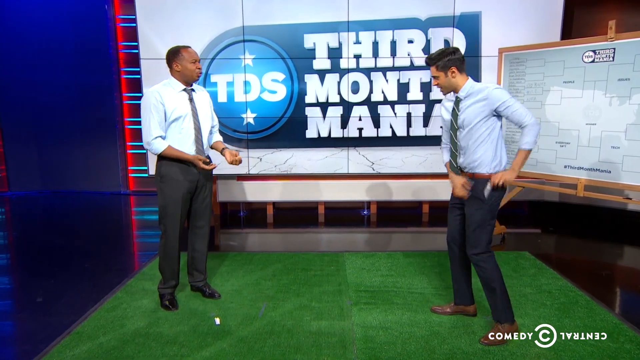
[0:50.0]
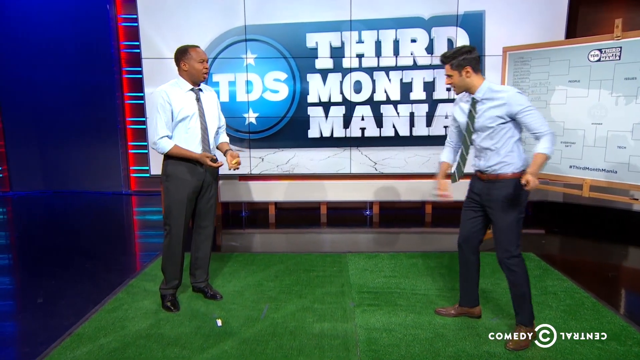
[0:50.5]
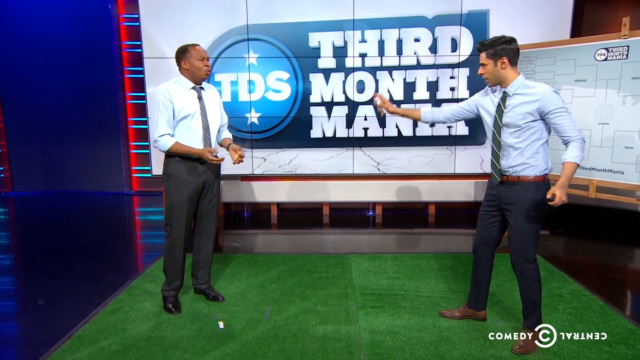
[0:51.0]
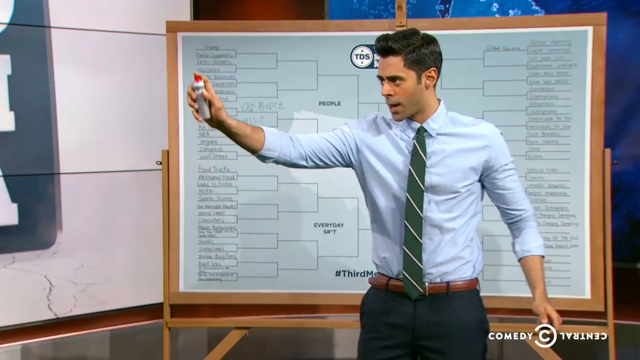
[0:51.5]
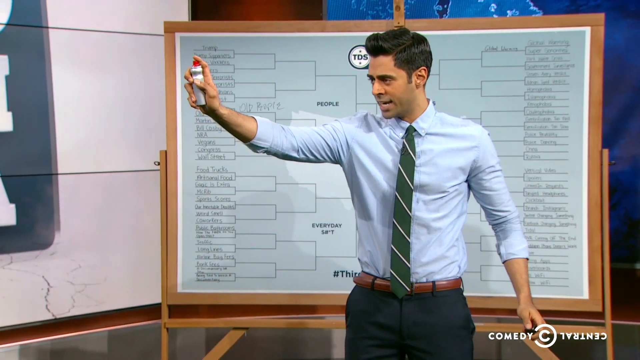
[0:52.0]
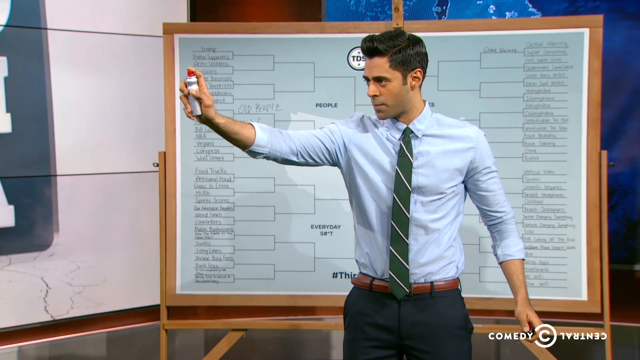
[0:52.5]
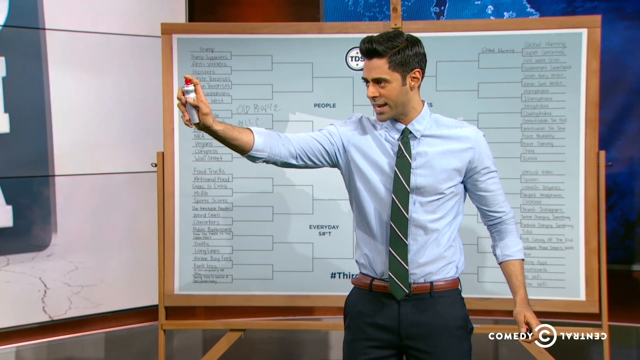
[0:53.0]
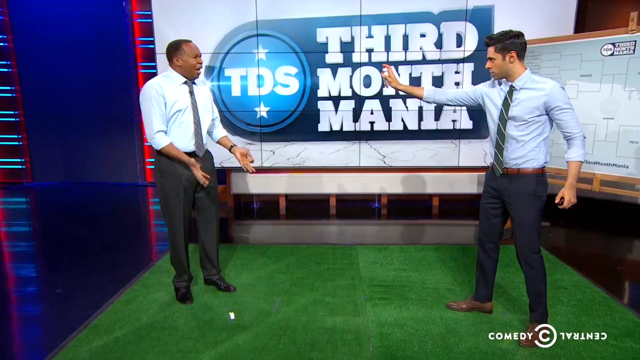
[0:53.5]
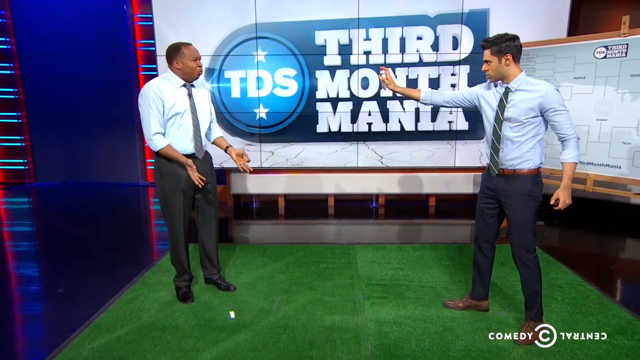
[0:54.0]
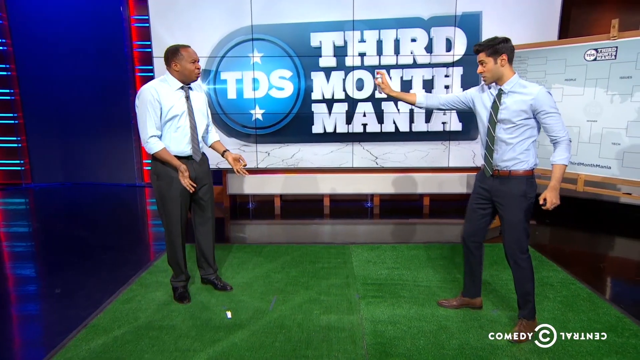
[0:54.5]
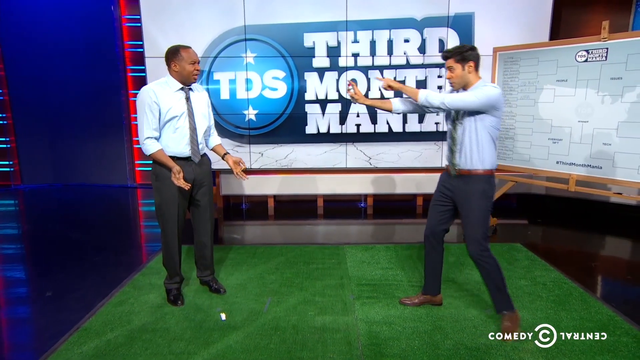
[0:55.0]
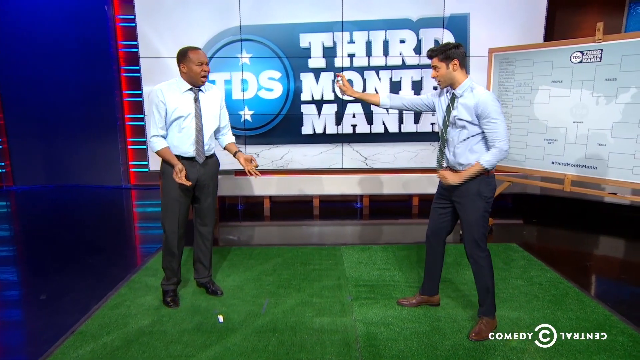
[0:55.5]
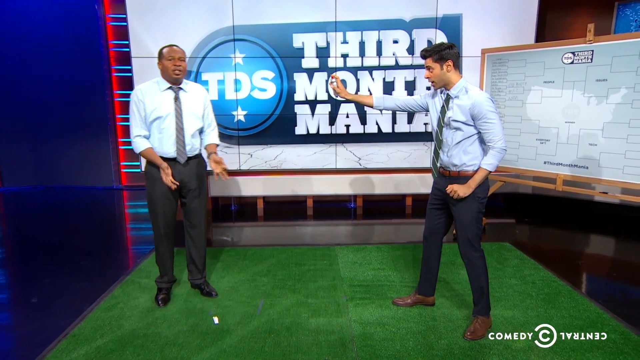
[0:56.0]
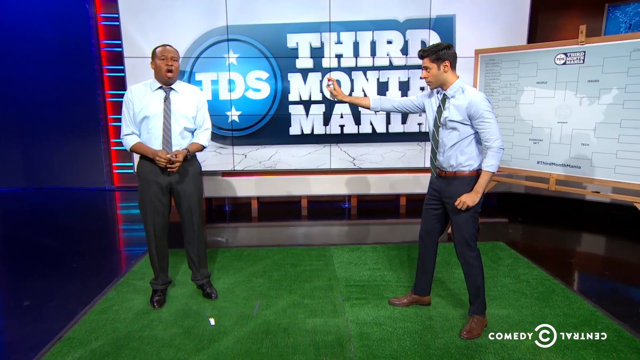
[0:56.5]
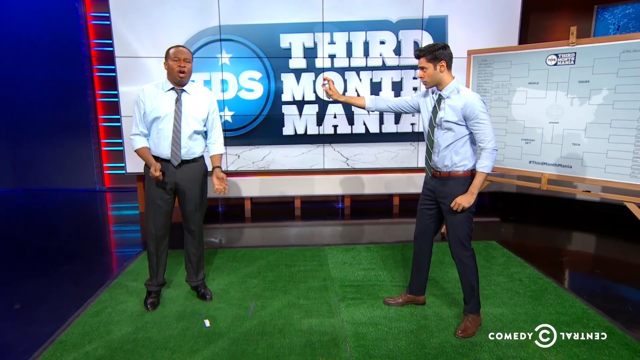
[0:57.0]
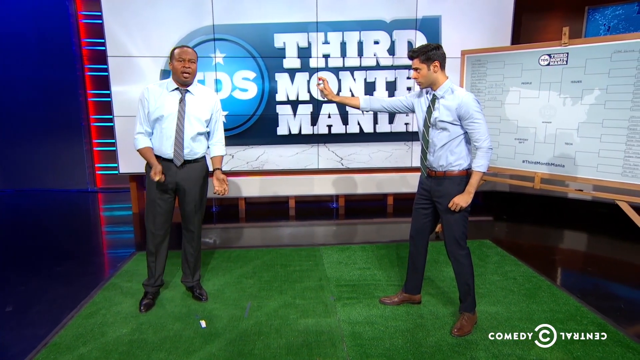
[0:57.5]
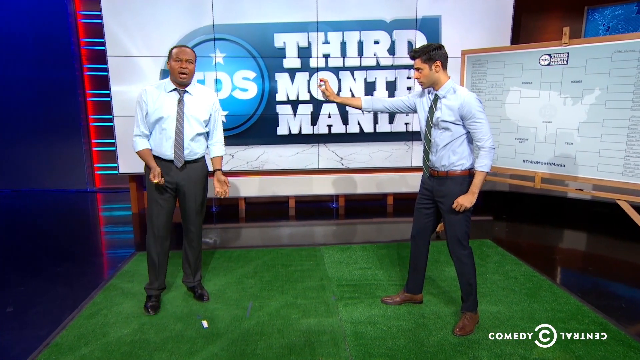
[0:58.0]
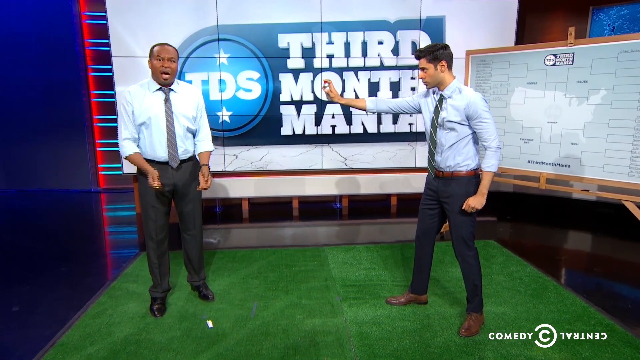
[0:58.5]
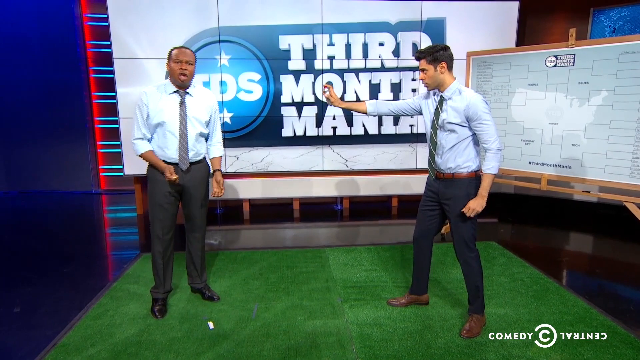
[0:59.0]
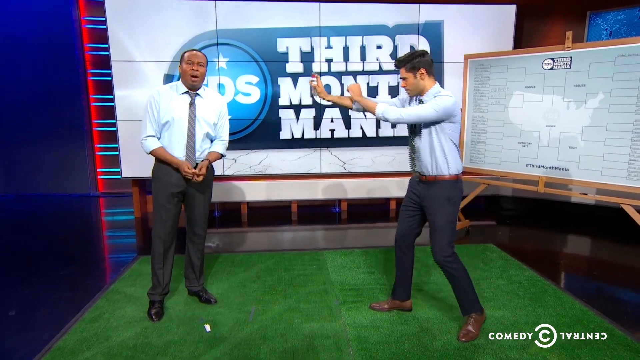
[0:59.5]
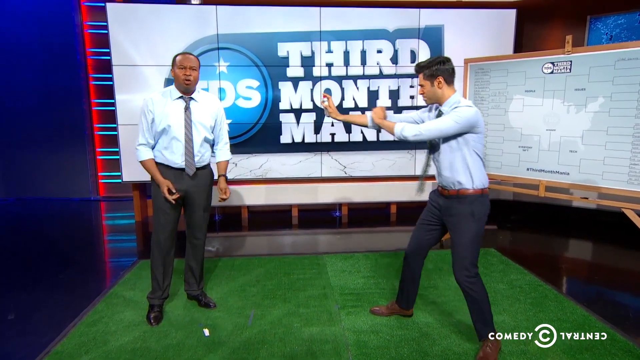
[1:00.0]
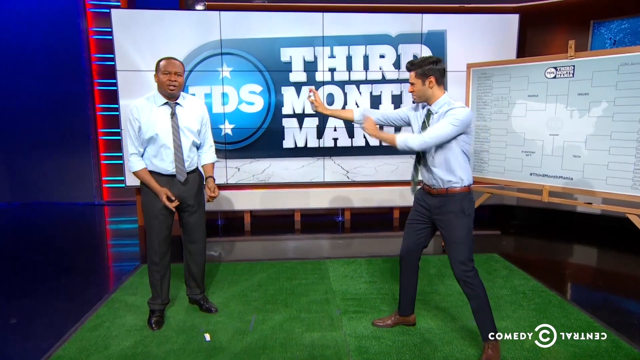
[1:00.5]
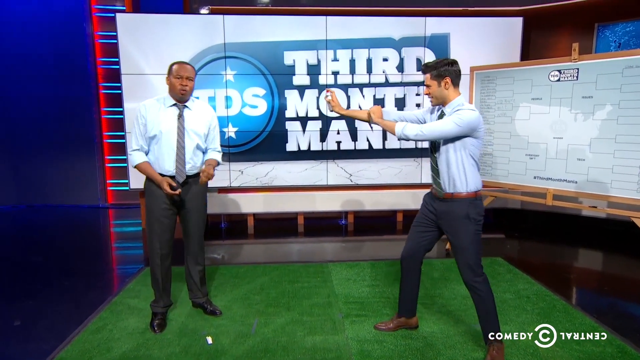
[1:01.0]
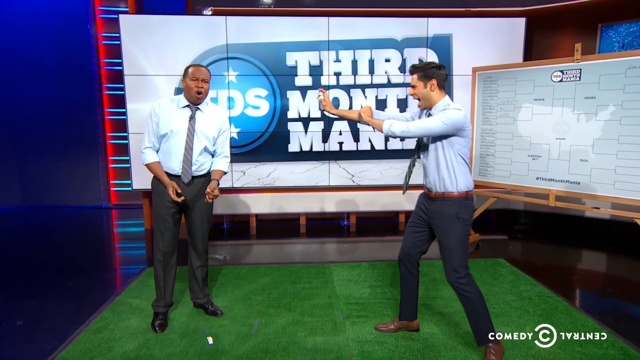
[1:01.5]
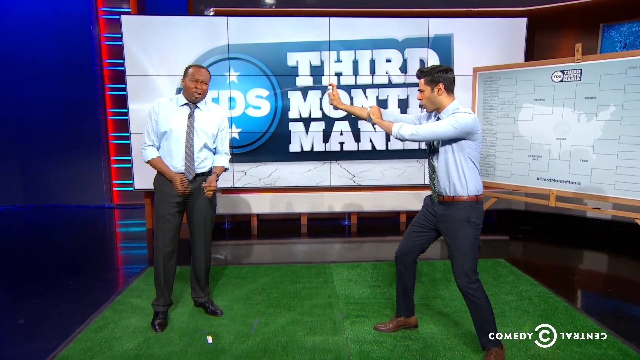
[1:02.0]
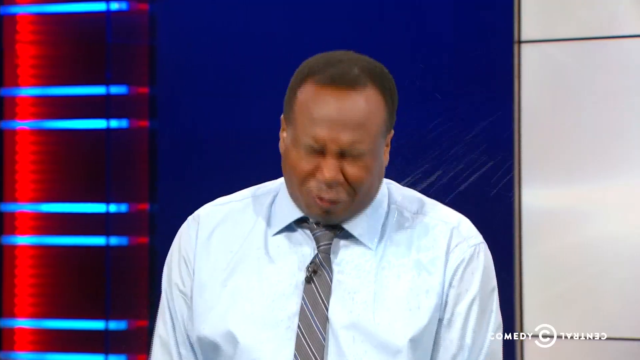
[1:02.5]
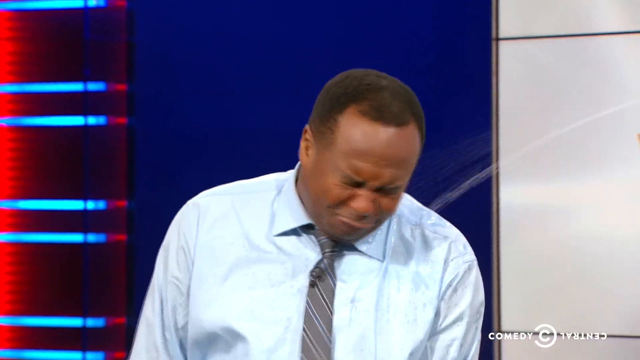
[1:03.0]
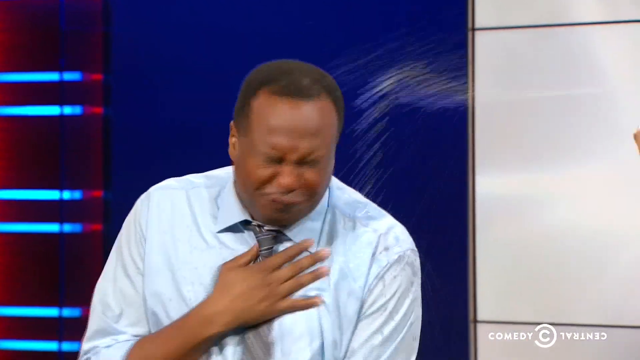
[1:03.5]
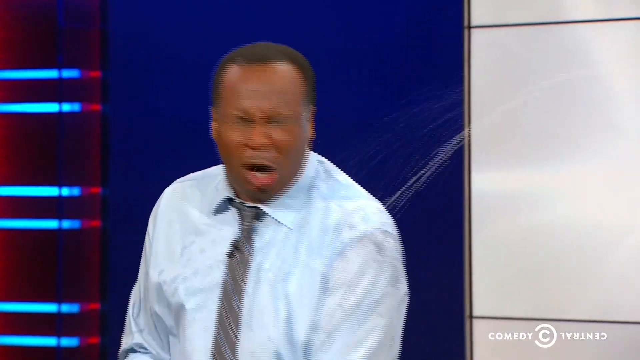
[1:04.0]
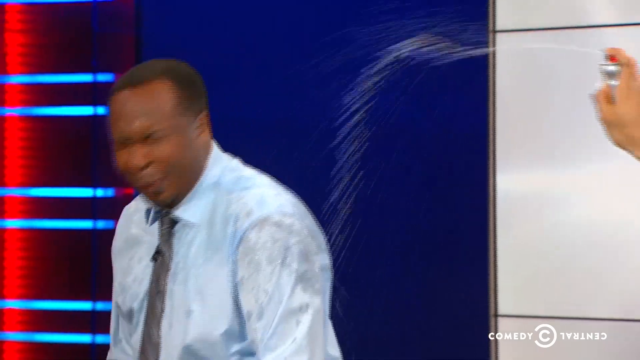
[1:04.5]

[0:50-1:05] One man pulls a spray with a red lid out of his pocket and appears to be warning or threatening the other. The other man holds out his hands and points toward the paper he dropped. The first man appears to scream and points to the lid of the item he is holding. The other man looks like he is yelling now, making his case with his hands held down. Then the first man starts to spray from the bottle what appears to be water, though it could be another liquid. The sprayed man leans into it for a second, then pushes back and tries to walk away from the spray. The spray looks fairly heavy for a few seconds, and some of it appears to get in his eye. It also dampens his shirt, turning it a darker color. The spraying appears to be done with a fair amount of force, likely over the dropped piece of paper.